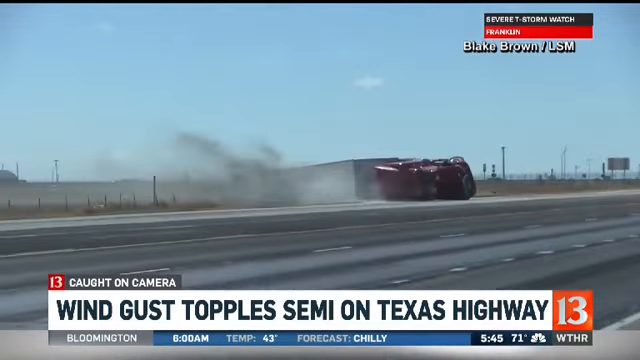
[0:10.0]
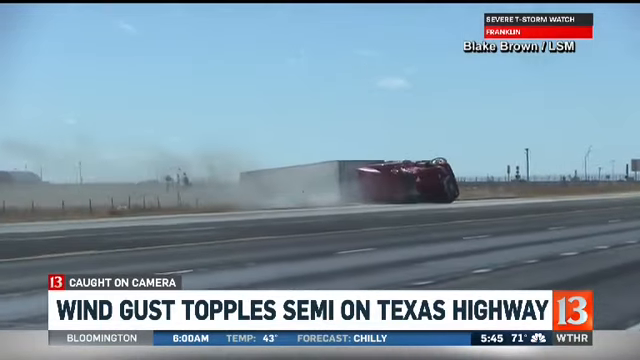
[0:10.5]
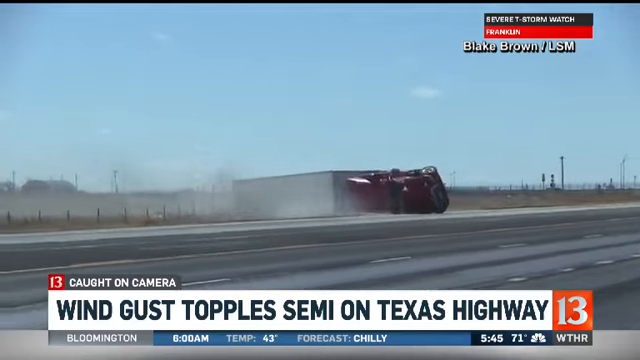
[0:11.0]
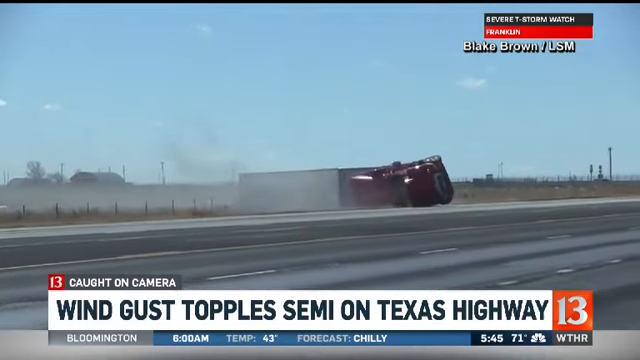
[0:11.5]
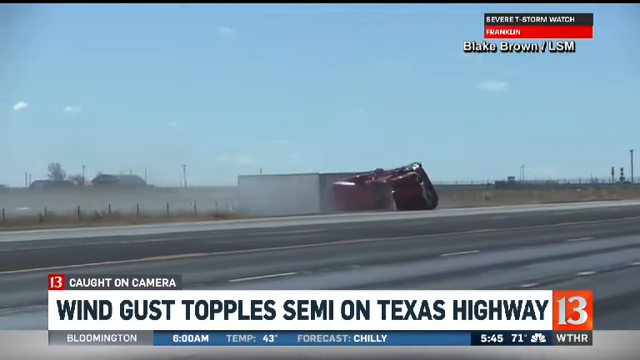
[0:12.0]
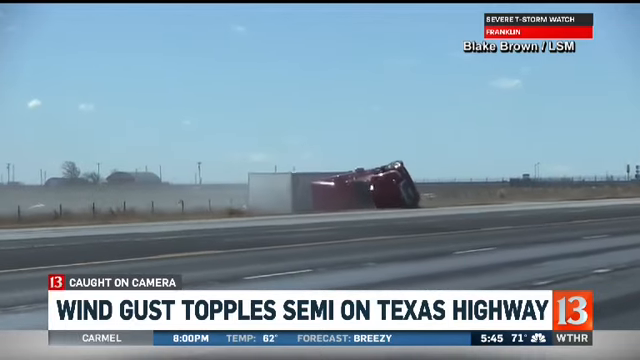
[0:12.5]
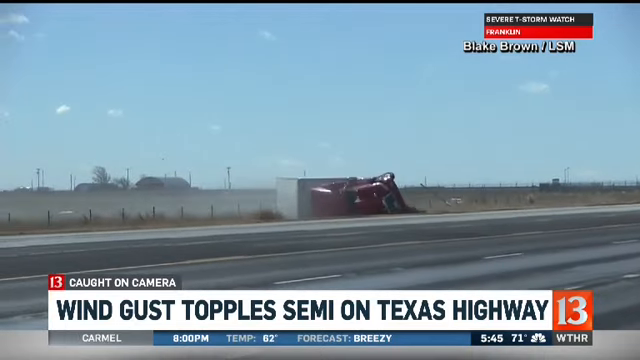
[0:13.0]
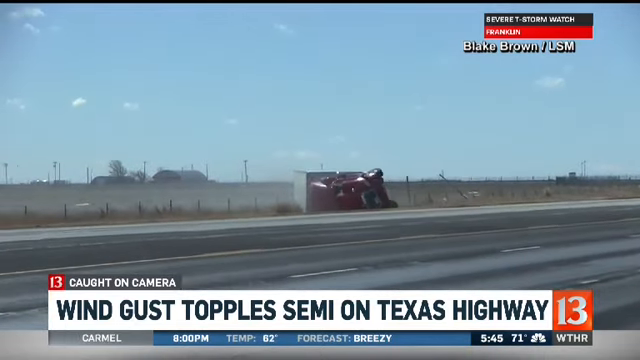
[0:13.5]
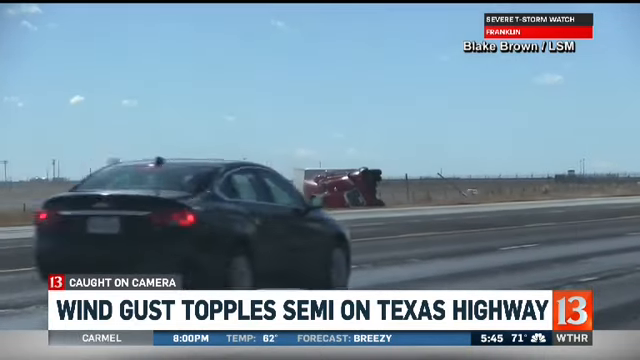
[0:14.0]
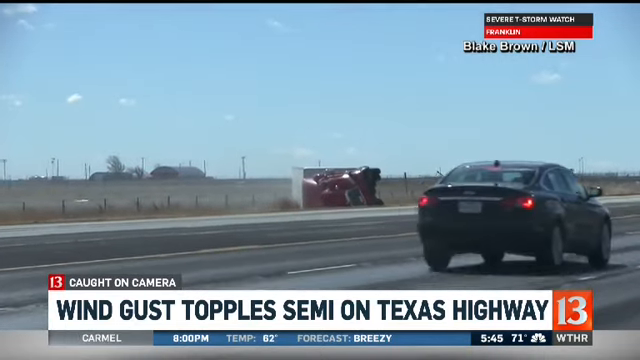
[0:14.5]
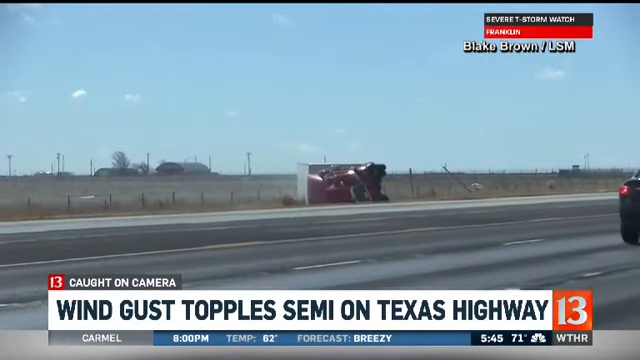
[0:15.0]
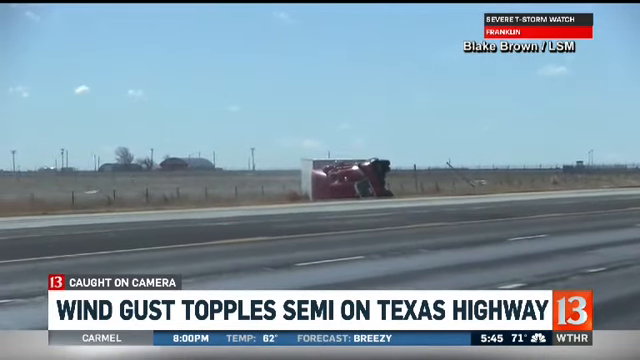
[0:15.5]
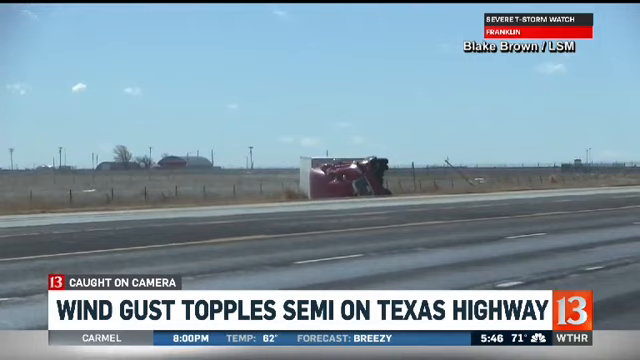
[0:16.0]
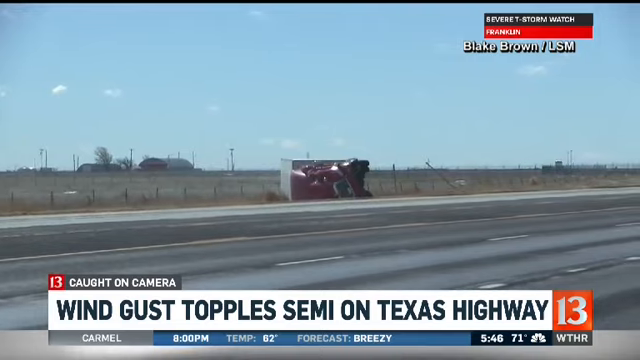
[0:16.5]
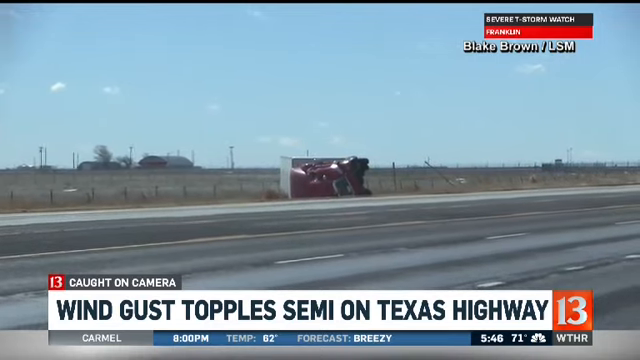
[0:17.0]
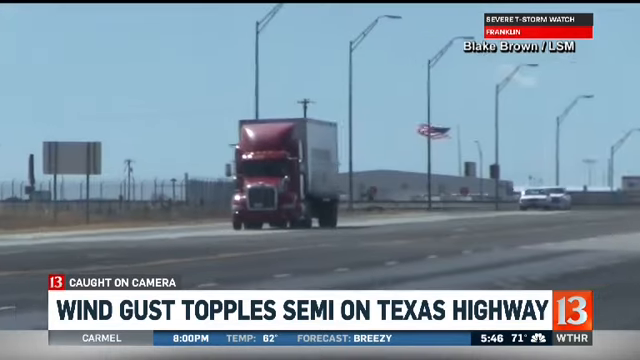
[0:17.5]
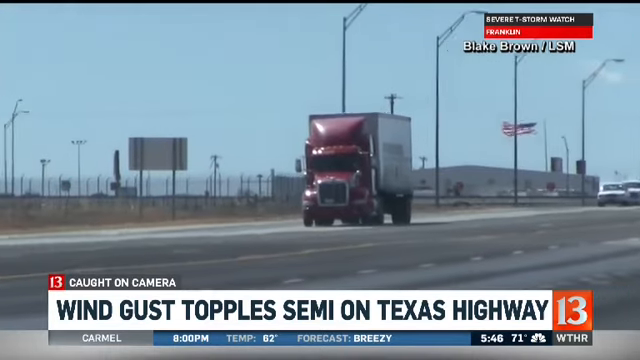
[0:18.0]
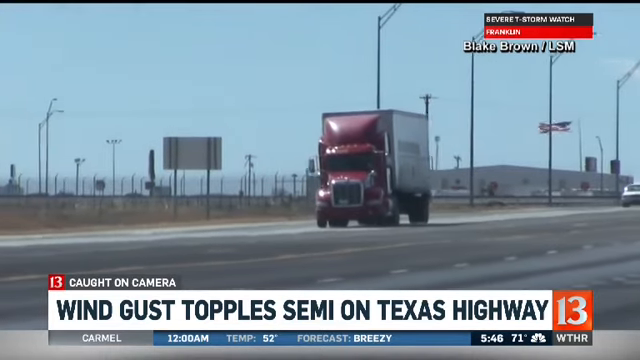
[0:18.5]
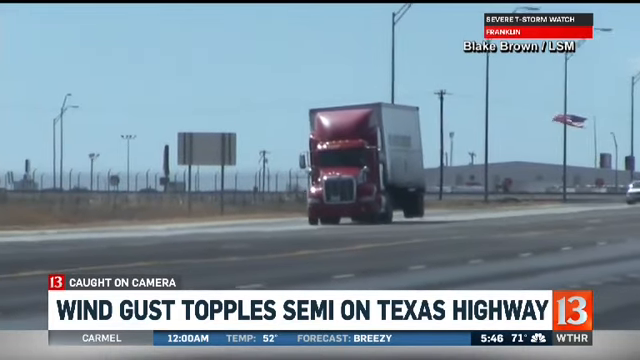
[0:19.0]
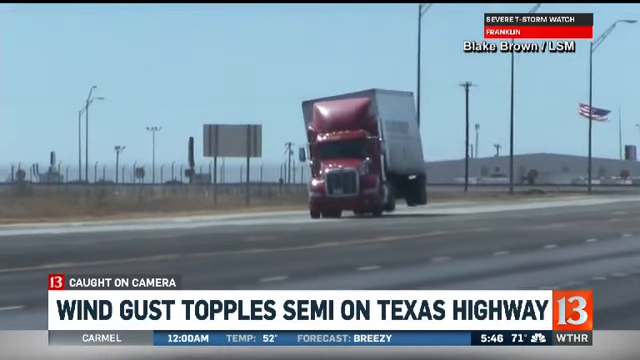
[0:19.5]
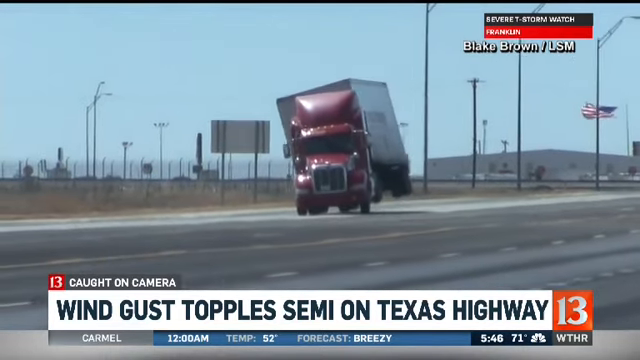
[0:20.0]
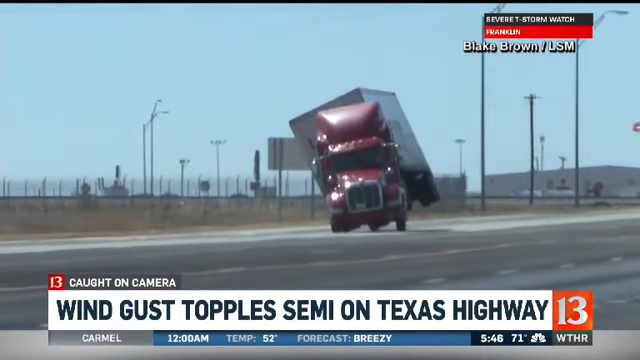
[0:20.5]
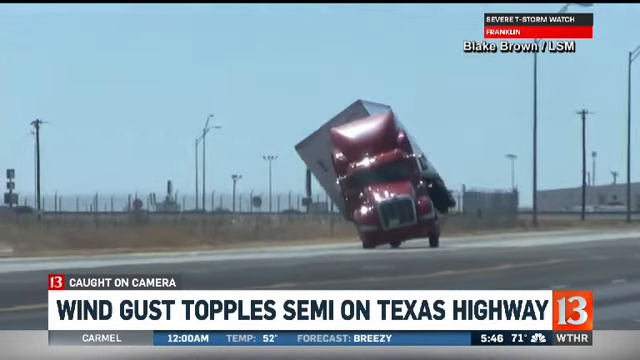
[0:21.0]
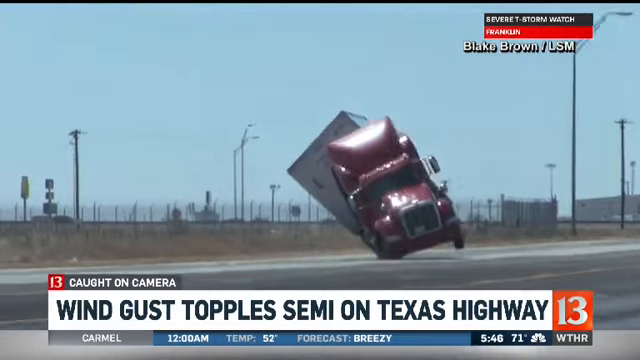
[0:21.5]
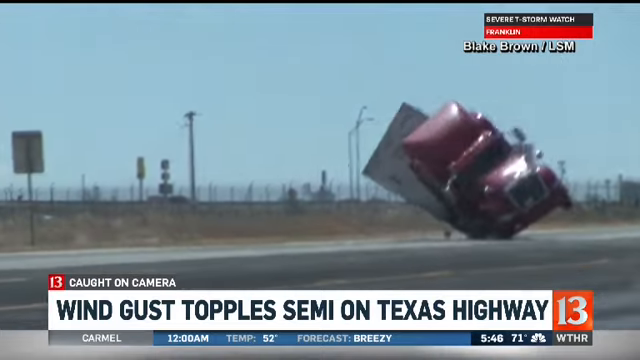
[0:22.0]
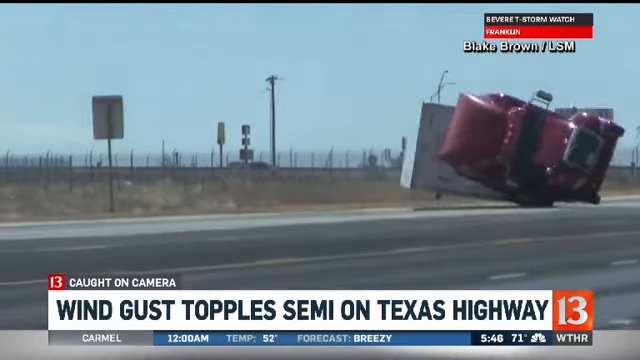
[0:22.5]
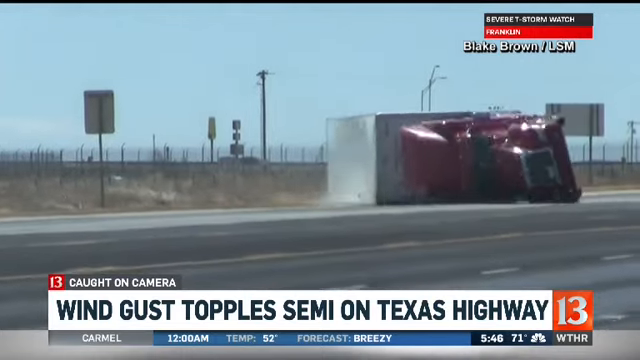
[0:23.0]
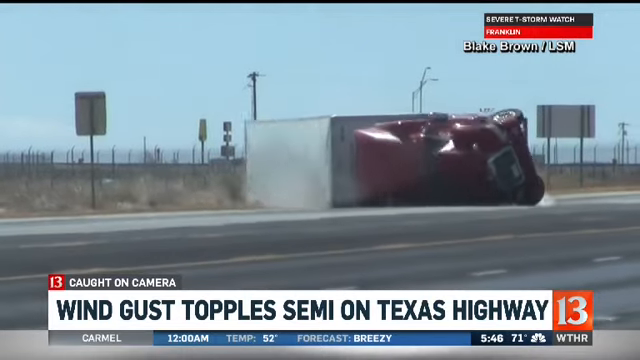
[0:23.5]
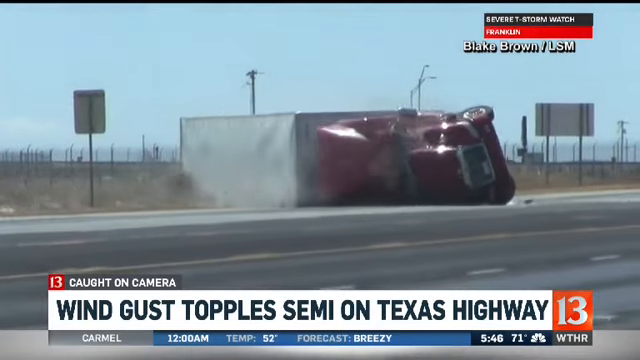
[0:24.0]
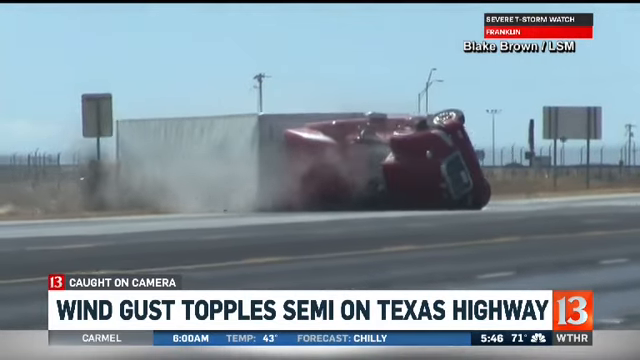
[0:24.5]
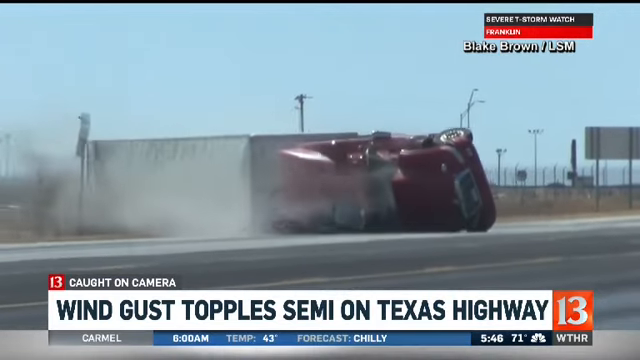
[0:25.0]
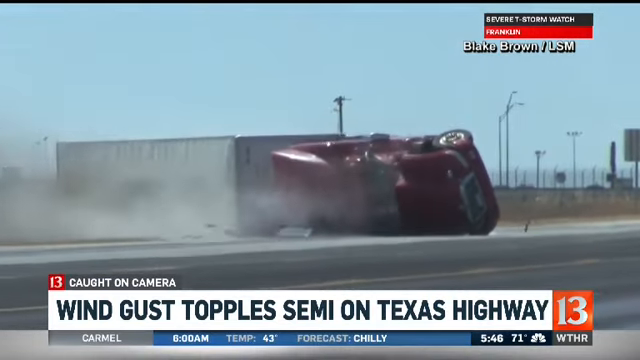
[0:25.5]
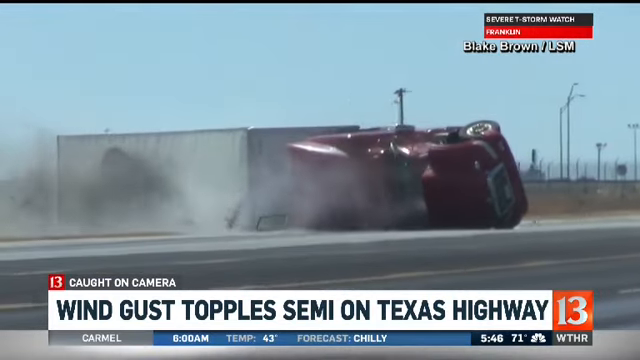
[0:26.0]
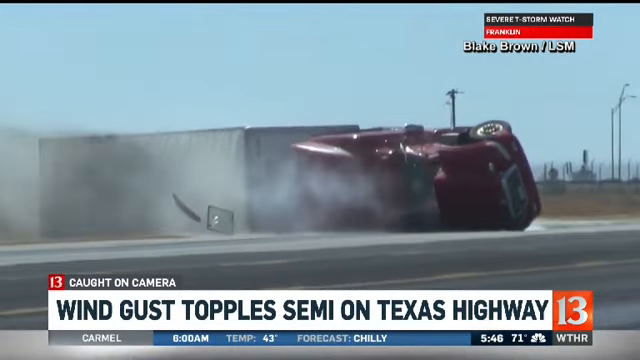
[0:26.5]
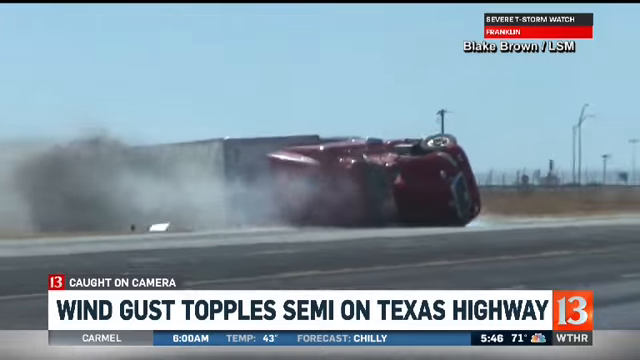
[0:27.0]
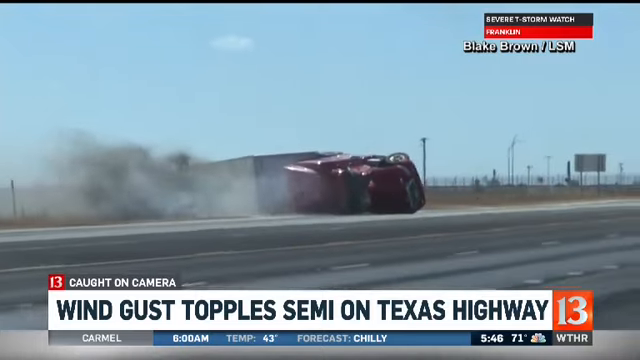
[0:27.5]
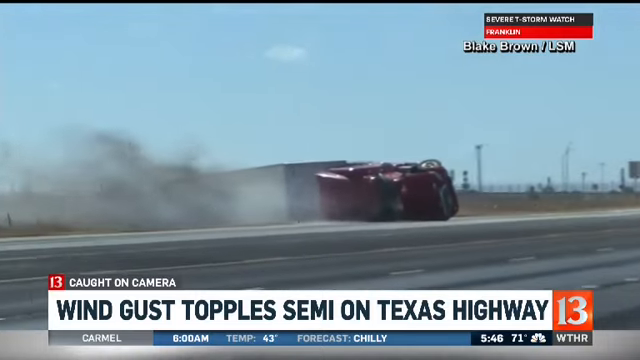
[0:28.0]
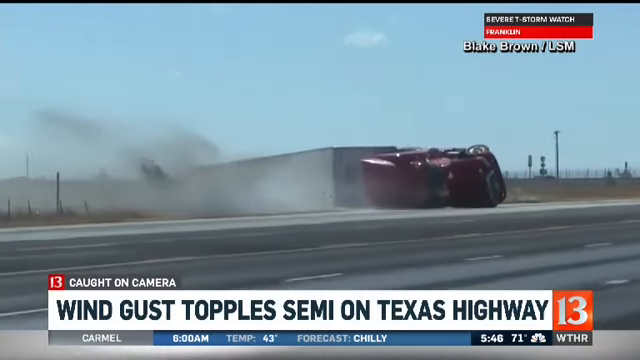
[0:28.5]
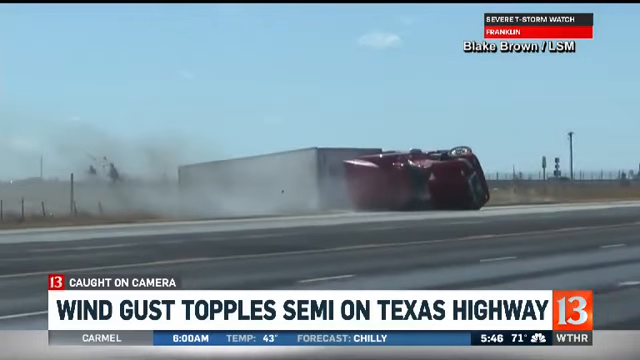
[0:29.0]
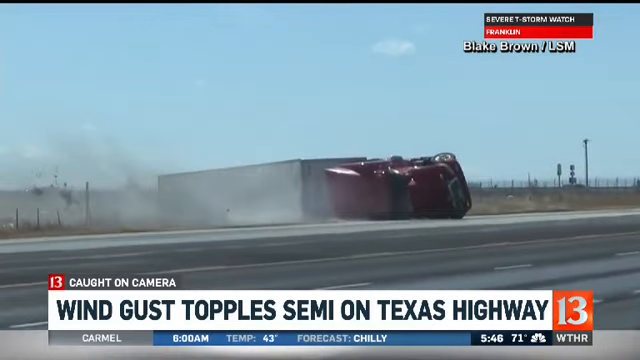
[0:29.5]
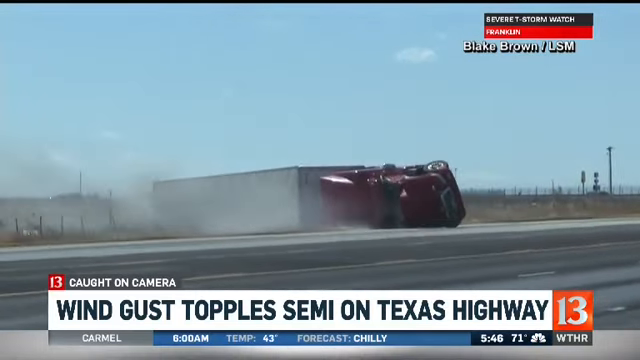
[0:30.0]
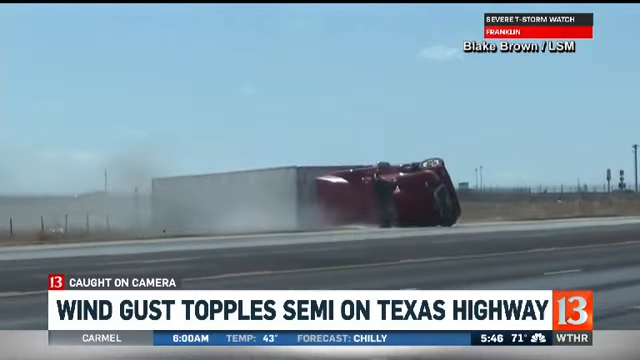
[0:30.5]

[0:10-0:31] The semi-truck kind of slides down the road, its sort of red top and front visible. The truck continues sliding, with its wheels and the back of the truck visible. The screen then kind of transitions to re-showing the truck driving down the highway in a kind of slow-motion replay style on the newscast, showing the wind gust toppling the semi on a Texas highway. The video ends while showing the semi in this news coverage, which appears to be for channel 13.